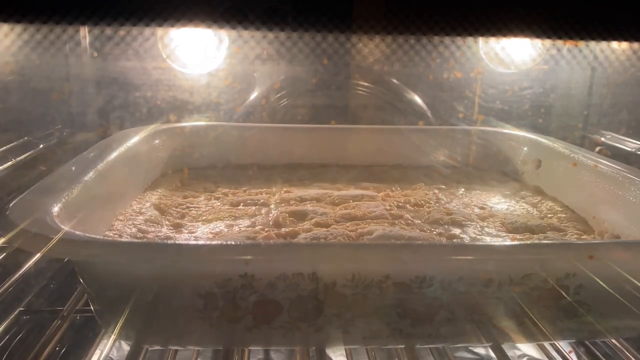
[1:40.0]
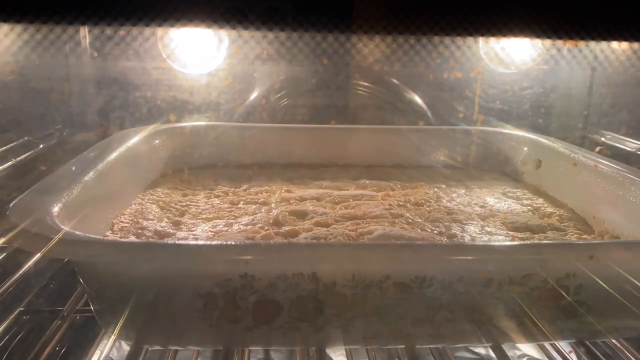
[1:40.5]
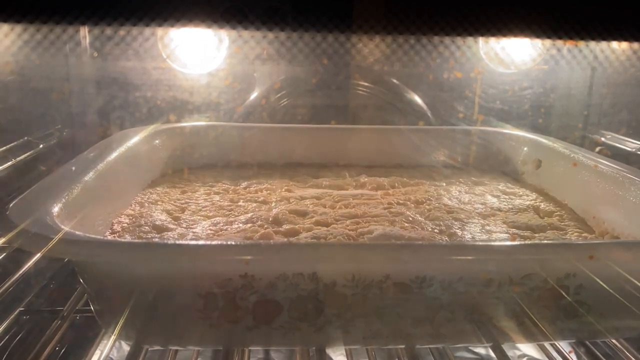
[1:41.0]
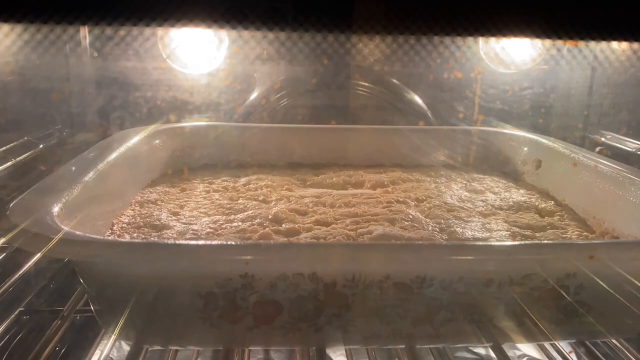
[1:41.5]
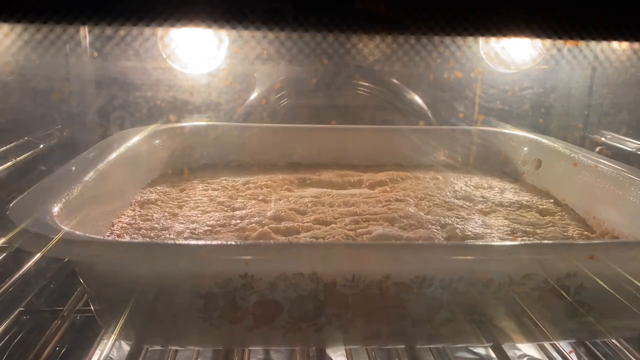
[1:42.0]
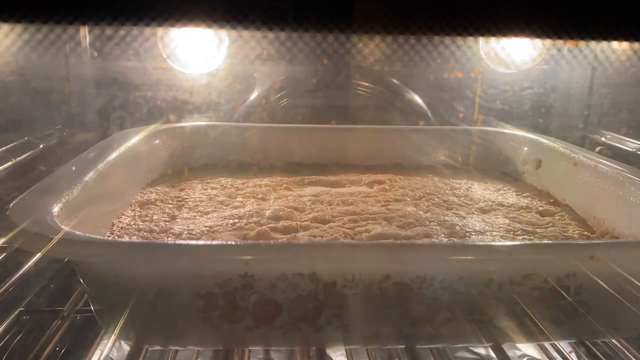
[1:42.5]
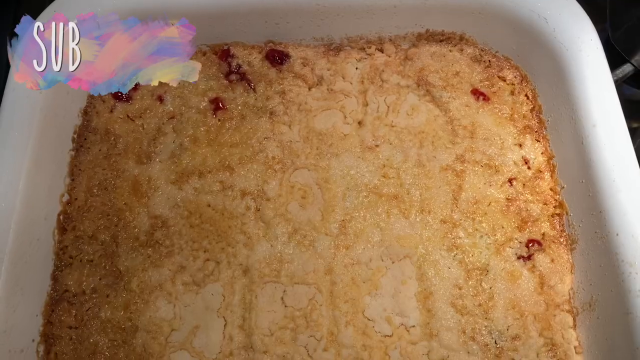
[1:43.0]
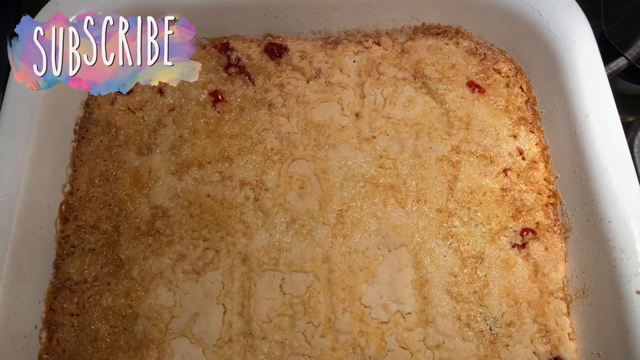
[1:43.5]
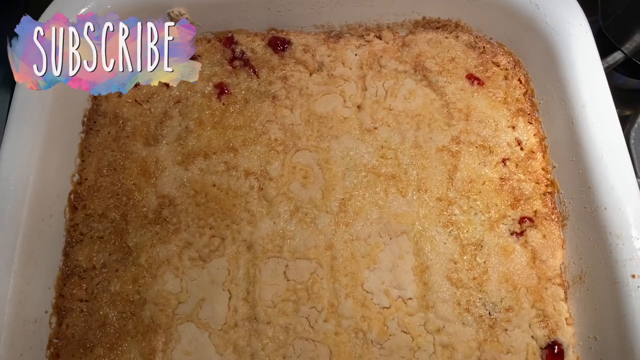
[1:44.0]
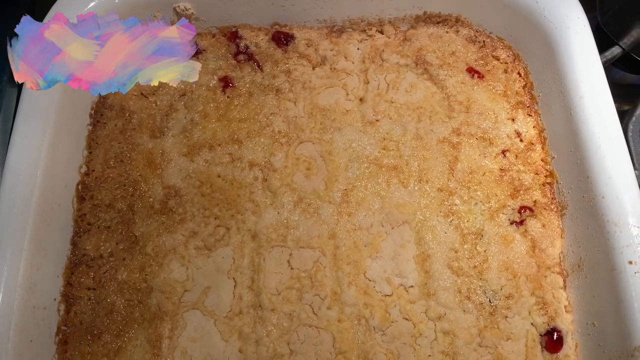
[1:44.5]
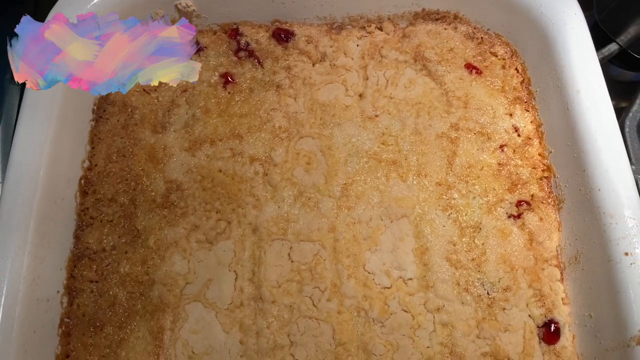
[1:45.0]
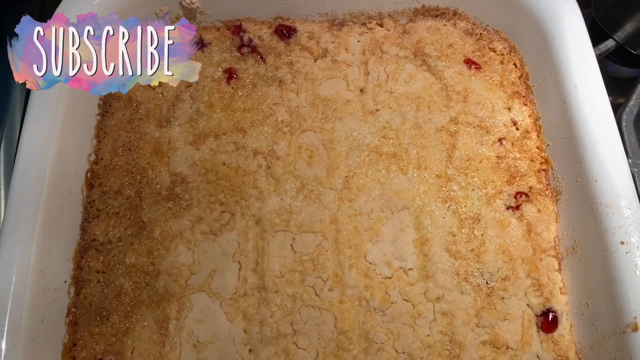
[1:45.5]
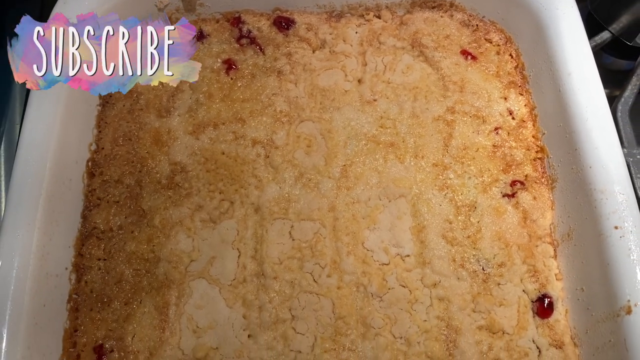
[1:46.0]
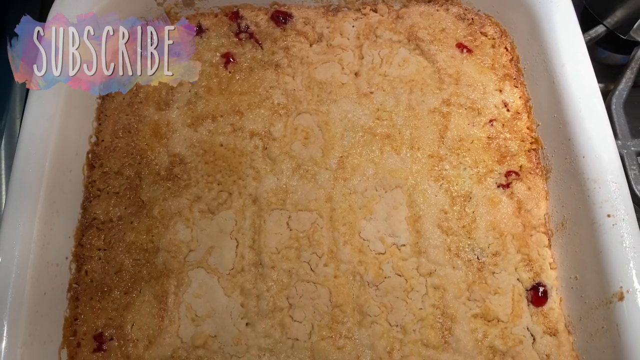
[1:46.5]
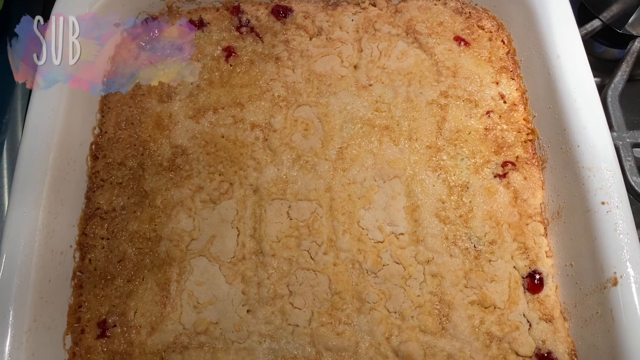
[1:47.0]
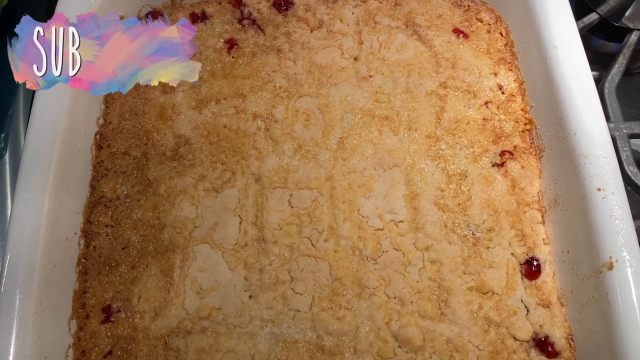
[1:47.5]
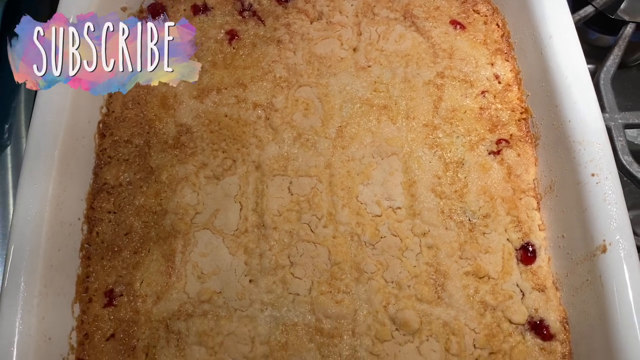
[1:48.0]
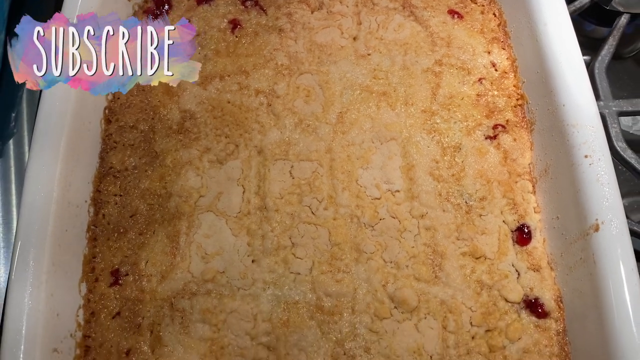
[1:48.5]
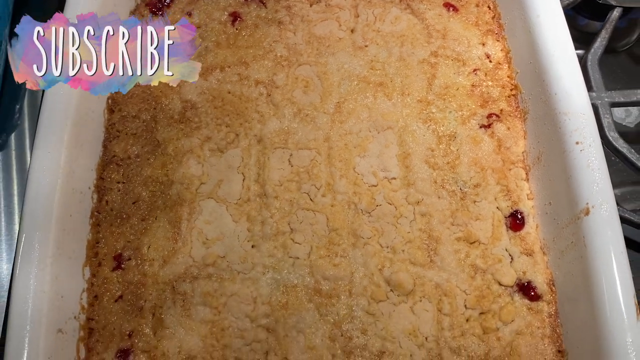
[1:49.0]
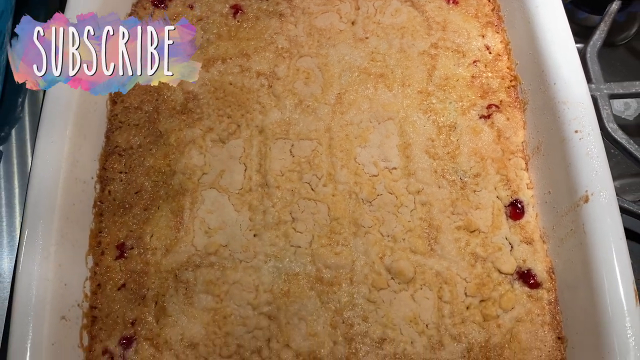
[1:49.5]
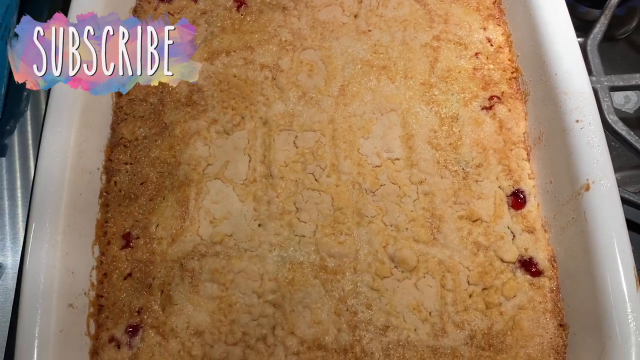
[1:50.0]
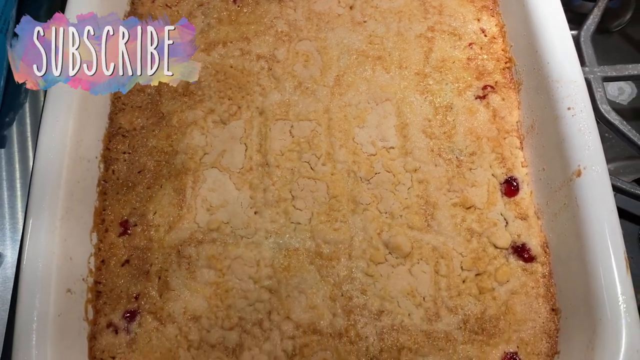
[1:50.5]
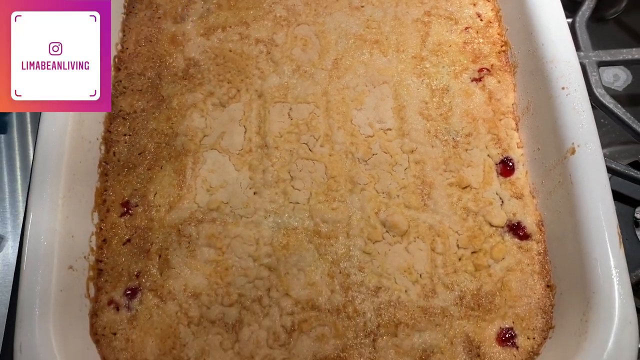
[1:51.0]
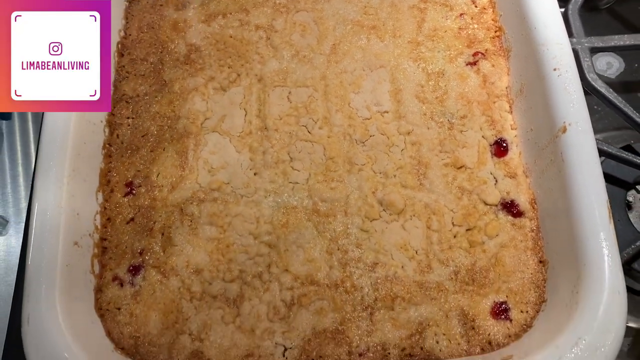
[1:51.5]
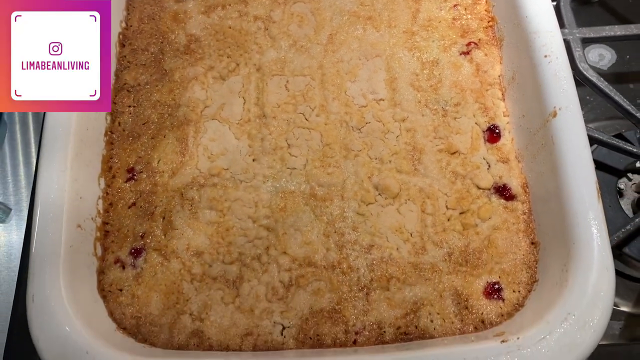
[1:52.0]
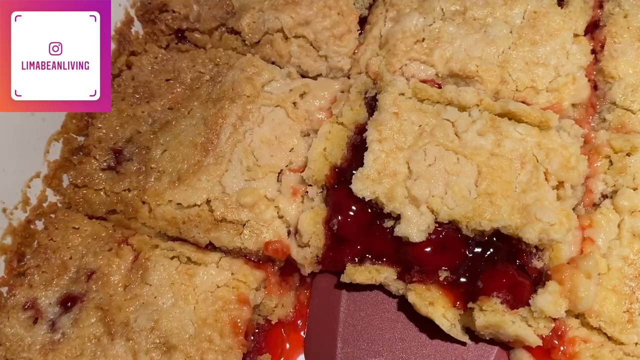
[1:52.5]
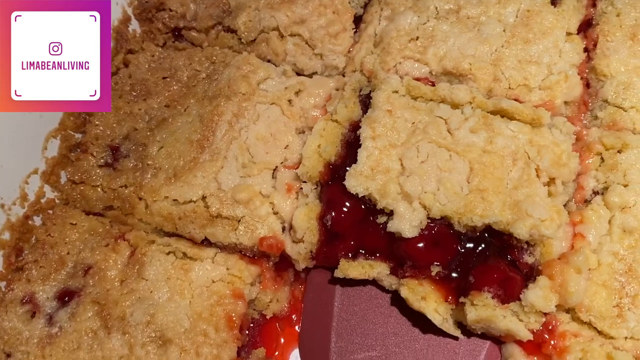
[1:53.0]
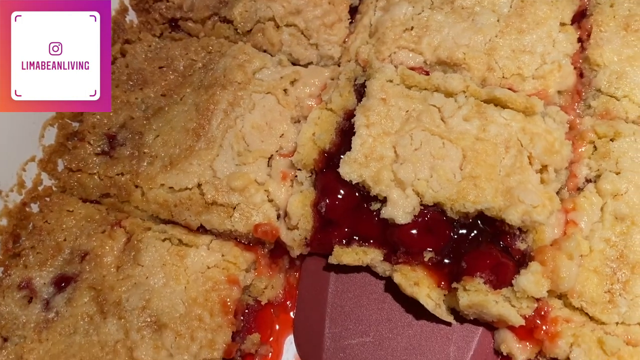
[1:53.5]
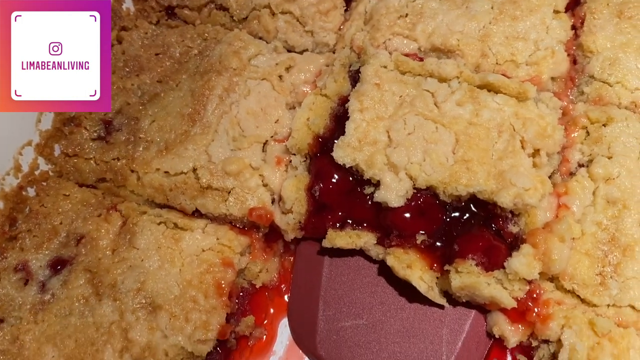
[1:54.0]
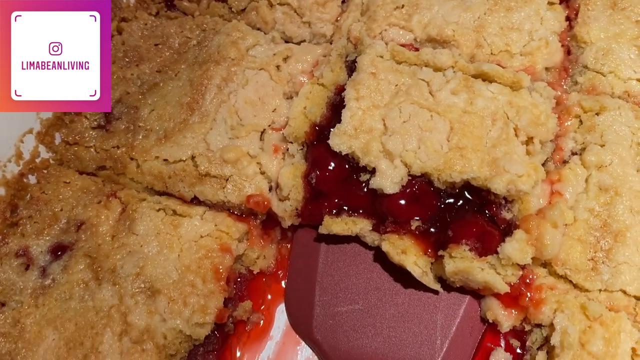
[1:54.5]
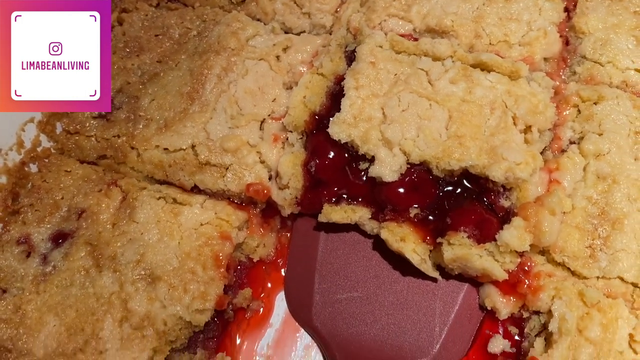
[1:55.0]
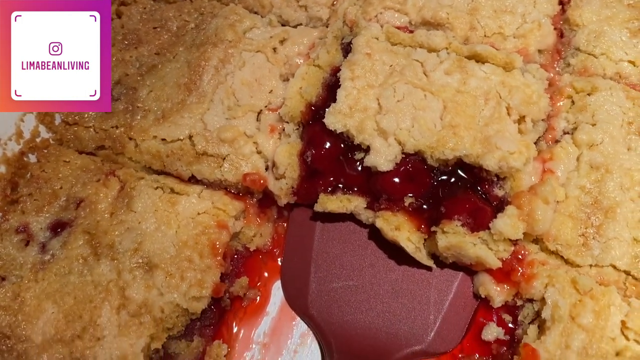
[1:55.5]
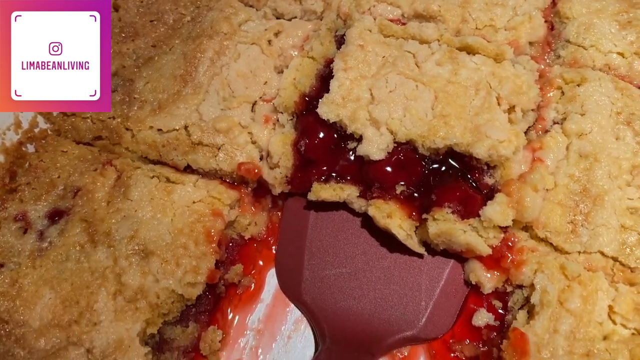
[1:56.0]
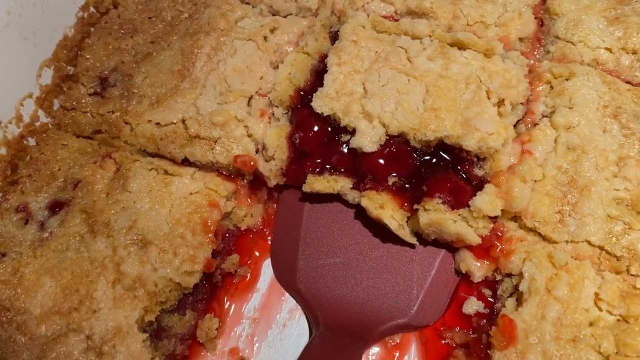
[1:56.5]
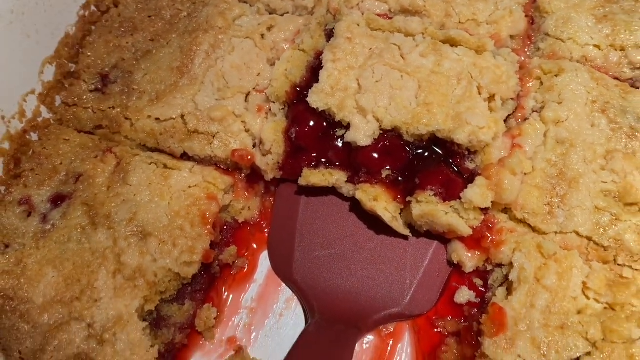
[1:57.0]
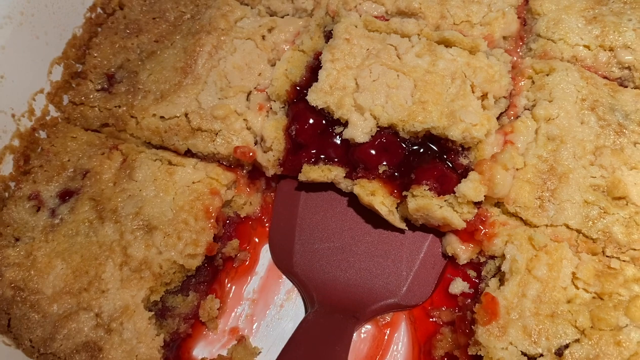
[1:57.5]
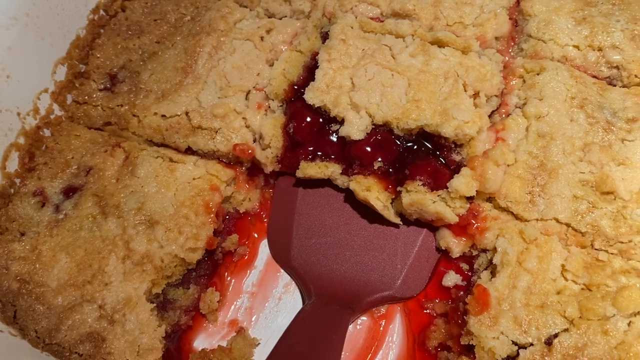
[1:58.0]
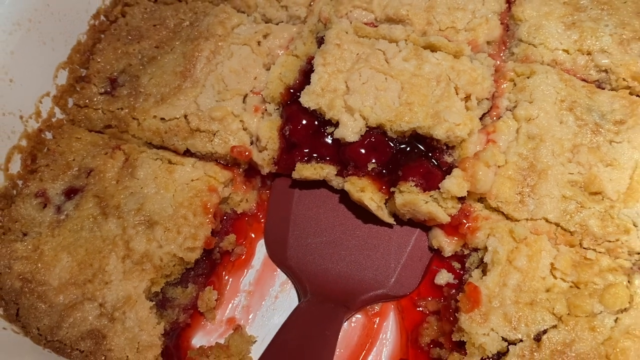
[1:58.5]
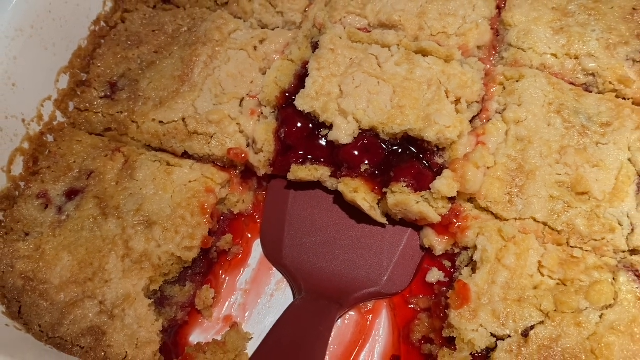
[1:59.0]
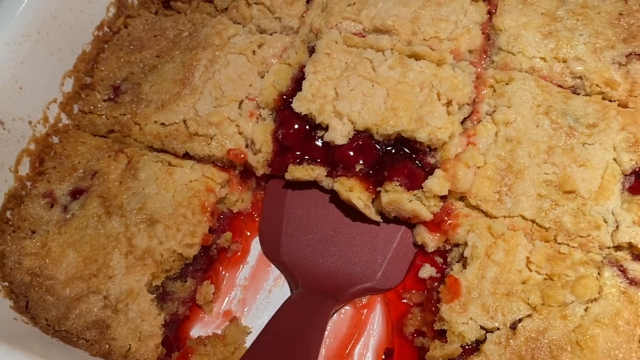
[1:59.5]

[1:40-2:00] A close-up through the glass oven door shows pastry baking in a white, square, deep-dish ceramic bowl. The crust begins to bubble as it cooks. Next, the freshly baked pastry is out of the oven. It has a very light golden crust, with some of the red filling slightly oozing out around the edges. The camera pans slowly backwards over the entire crust in the white ceramic baking dish. In the upper left corner of the screen, the word "subscribe" pops up and then disappears, replaced by an Instagram handle in a square shape for LimaBeanliving. Next, a close-up shows the top of the pastry, now partitioned into squares, with a deep red spatula stuck underneath one of the squares in the middle to scoop it out.